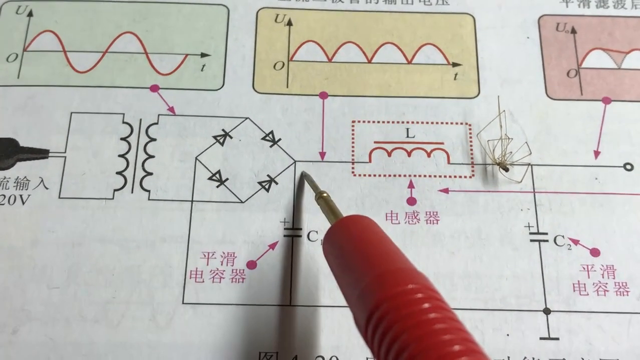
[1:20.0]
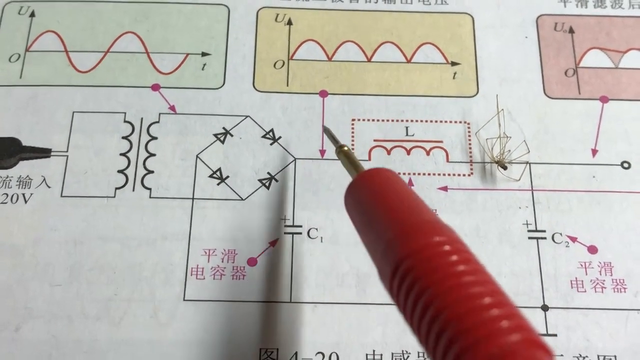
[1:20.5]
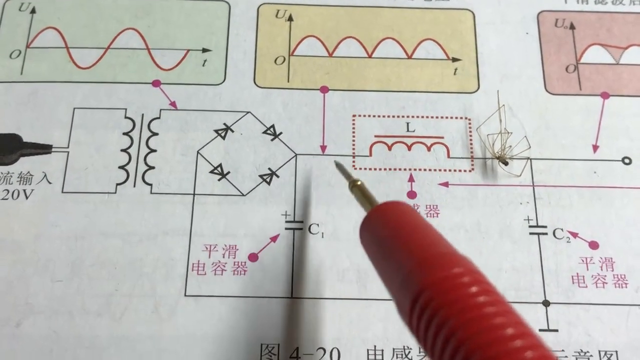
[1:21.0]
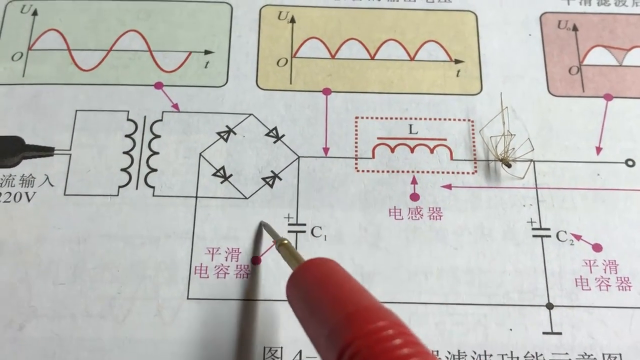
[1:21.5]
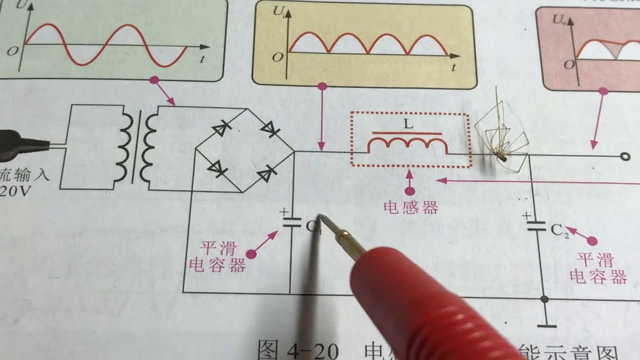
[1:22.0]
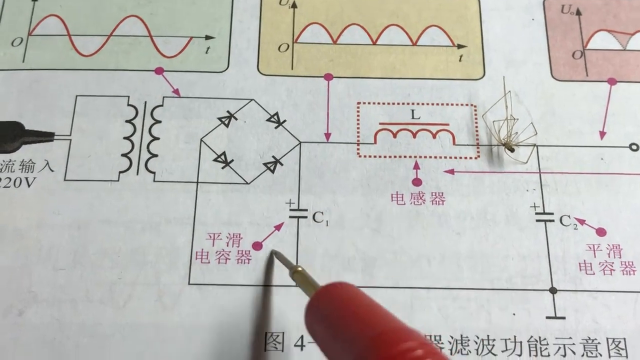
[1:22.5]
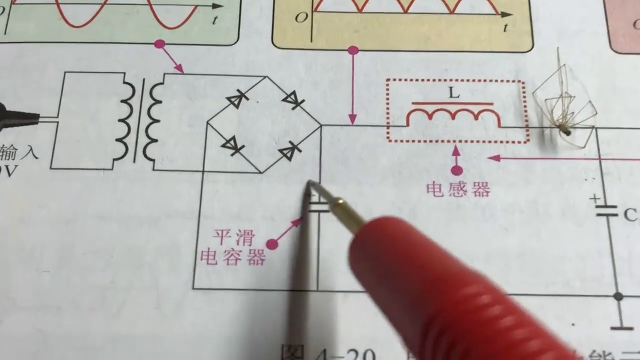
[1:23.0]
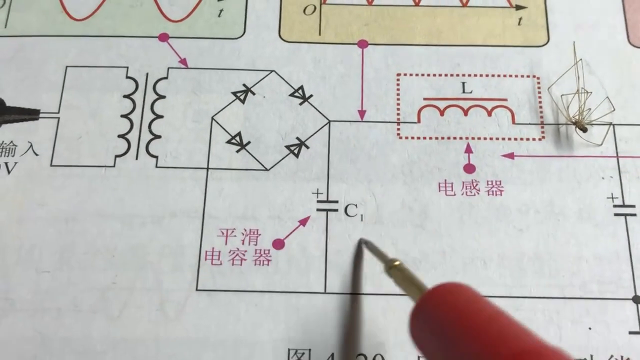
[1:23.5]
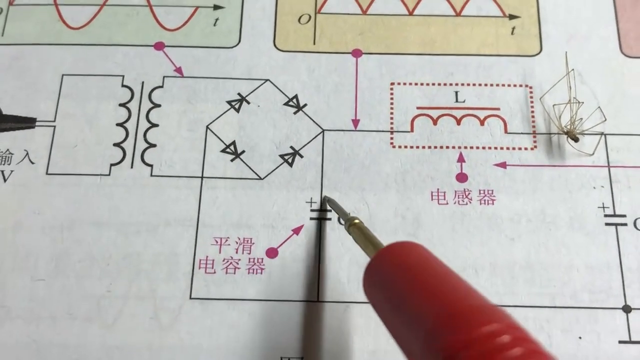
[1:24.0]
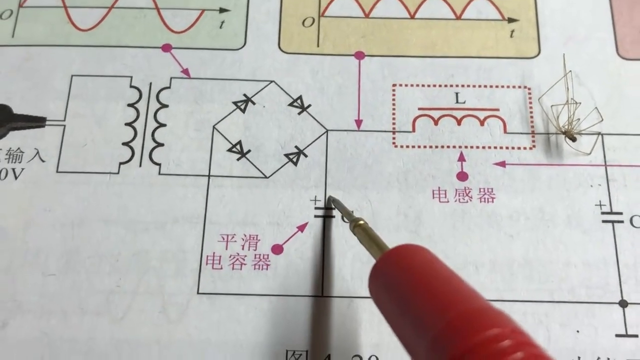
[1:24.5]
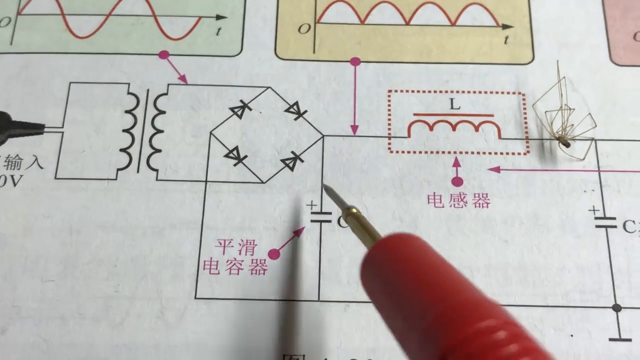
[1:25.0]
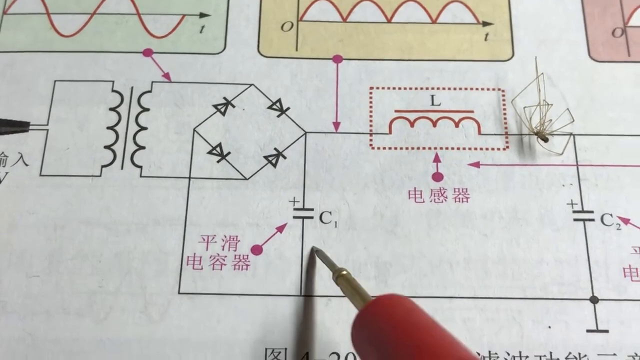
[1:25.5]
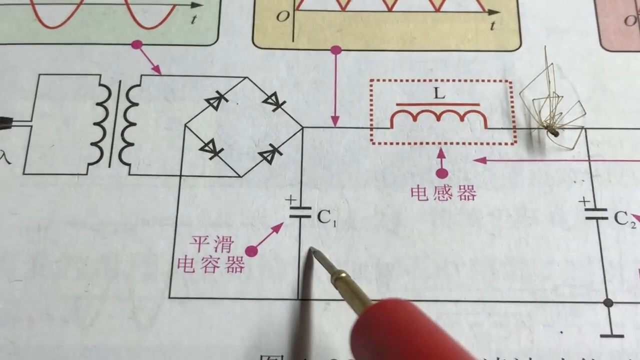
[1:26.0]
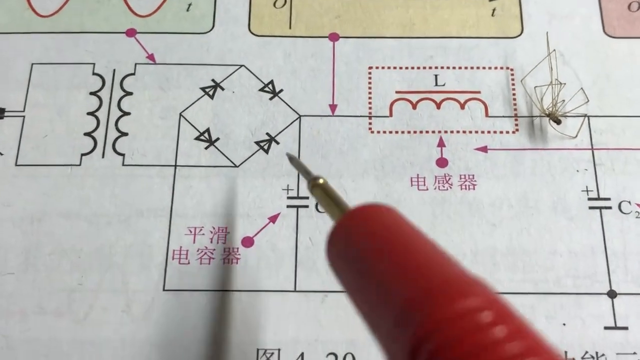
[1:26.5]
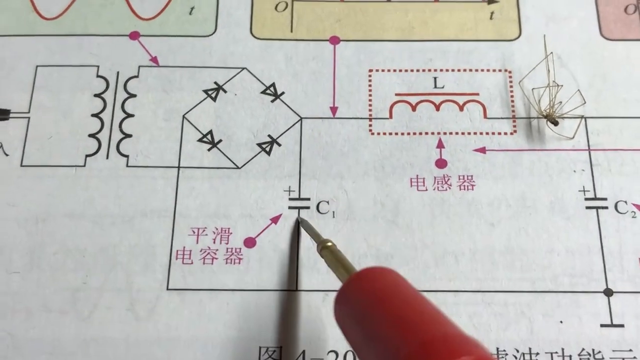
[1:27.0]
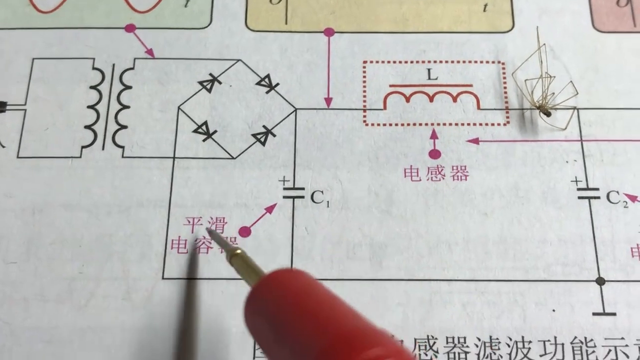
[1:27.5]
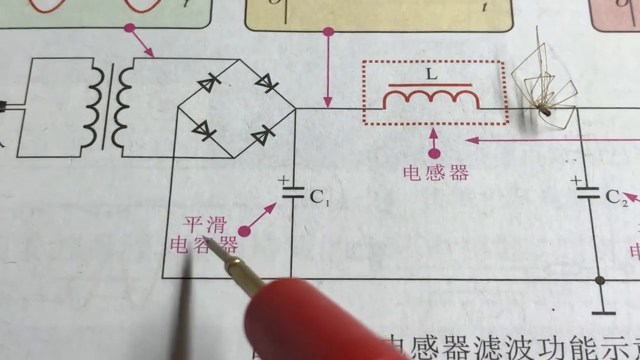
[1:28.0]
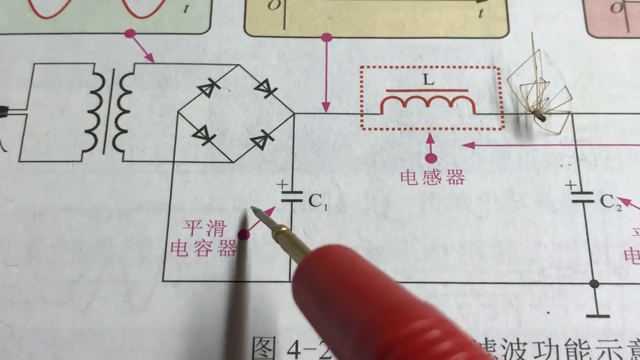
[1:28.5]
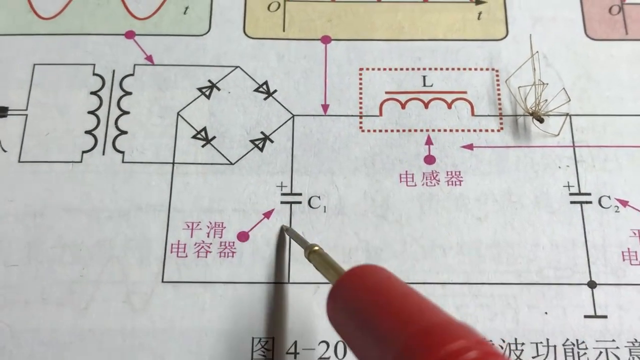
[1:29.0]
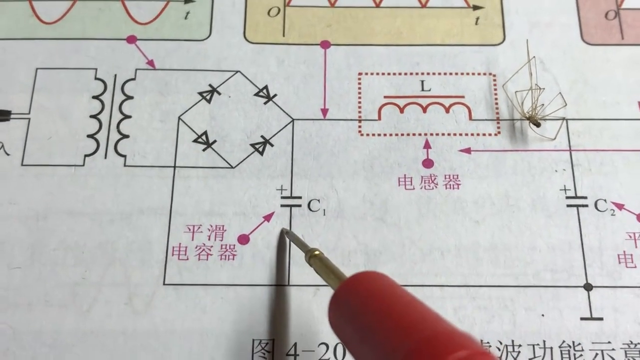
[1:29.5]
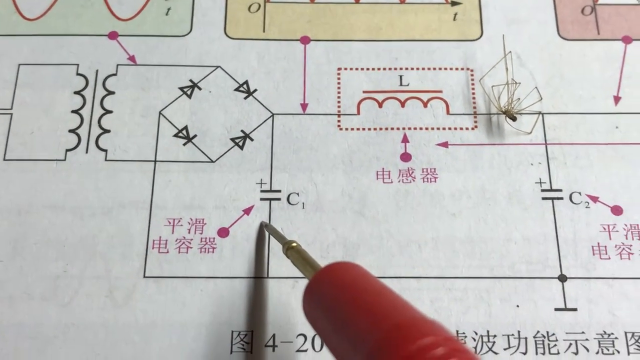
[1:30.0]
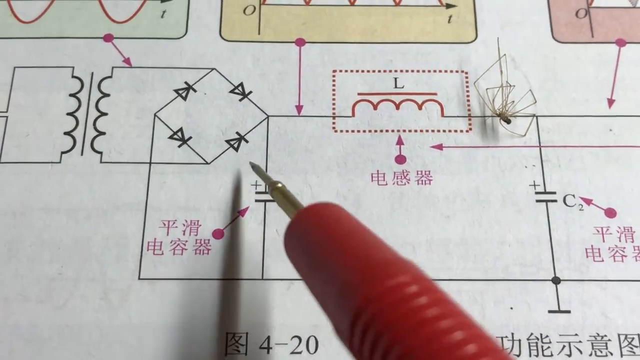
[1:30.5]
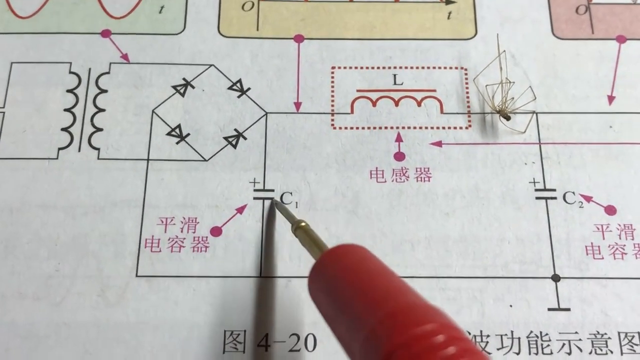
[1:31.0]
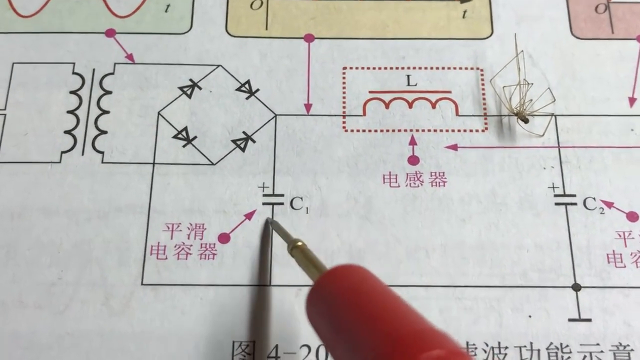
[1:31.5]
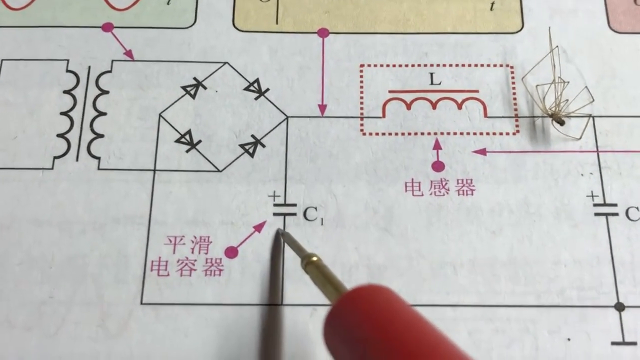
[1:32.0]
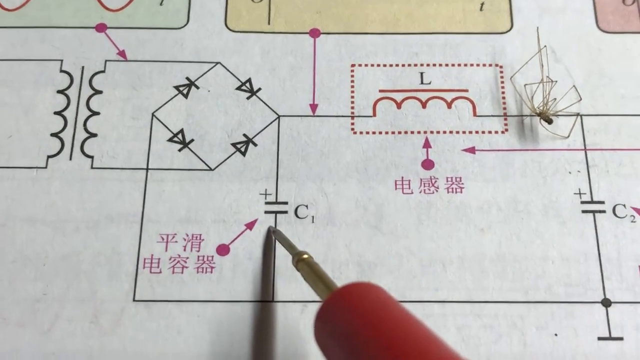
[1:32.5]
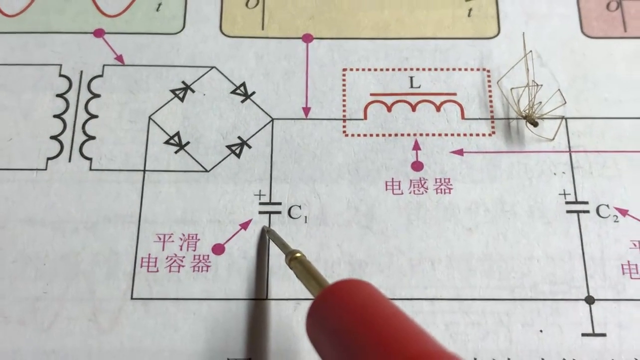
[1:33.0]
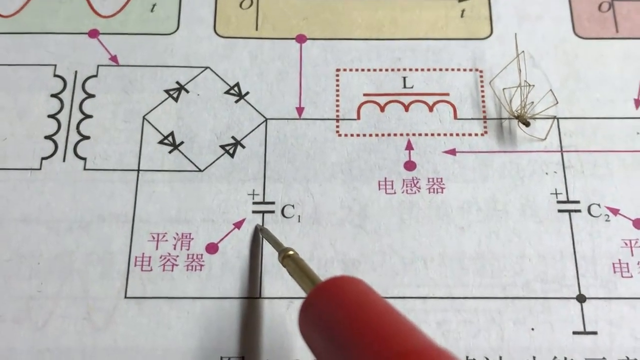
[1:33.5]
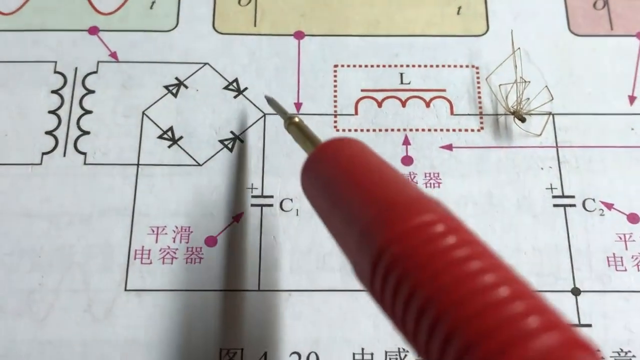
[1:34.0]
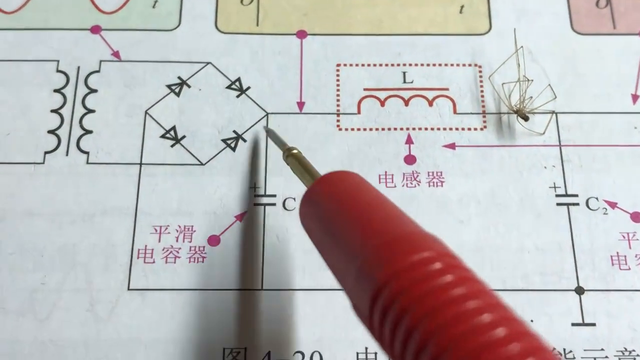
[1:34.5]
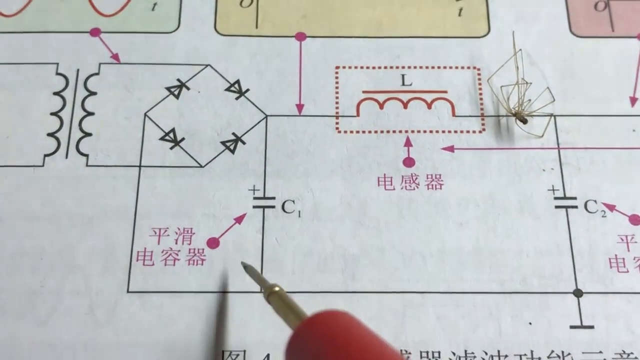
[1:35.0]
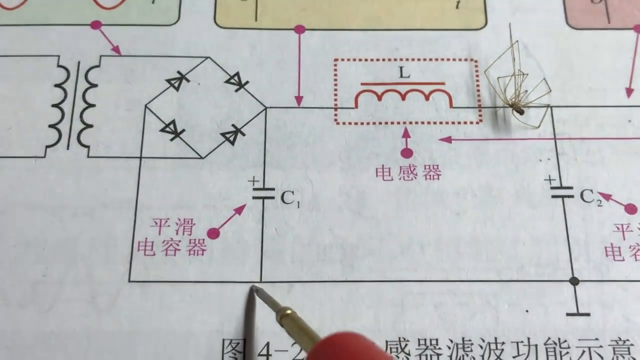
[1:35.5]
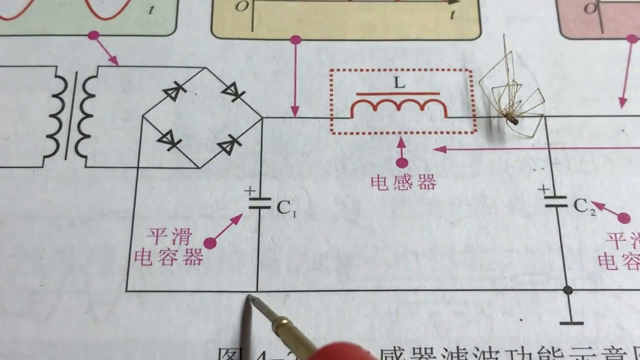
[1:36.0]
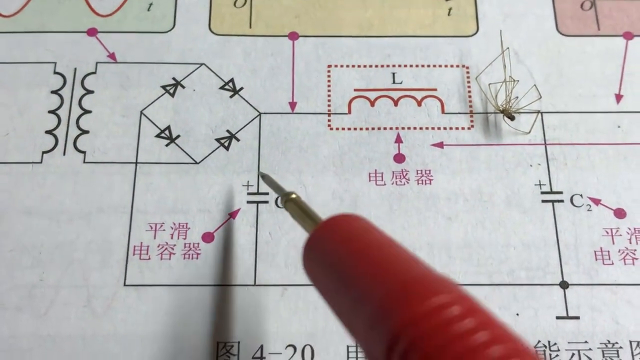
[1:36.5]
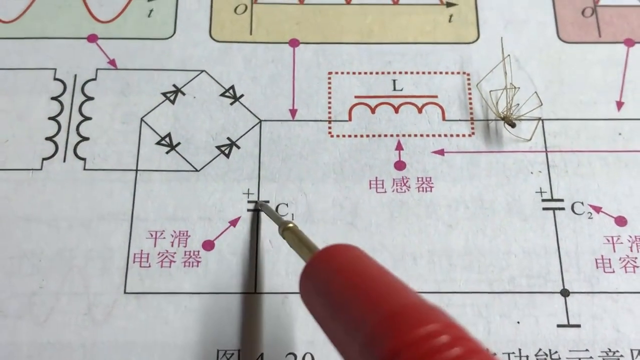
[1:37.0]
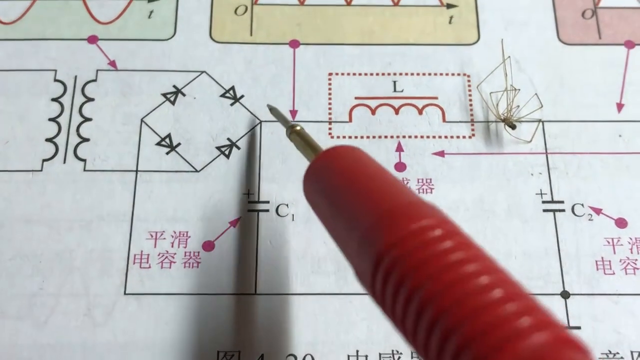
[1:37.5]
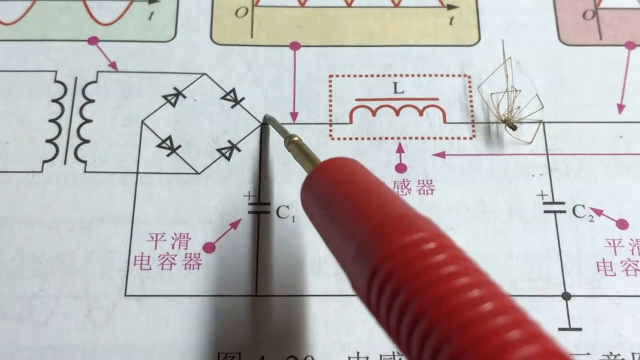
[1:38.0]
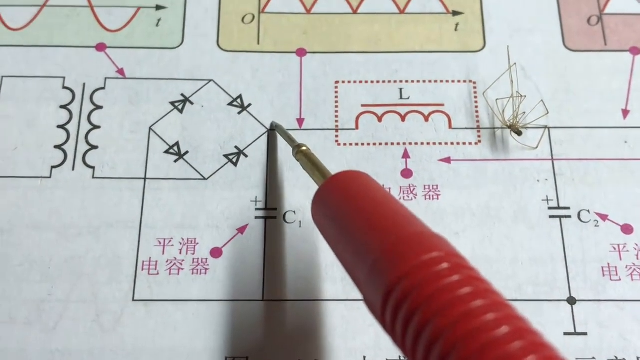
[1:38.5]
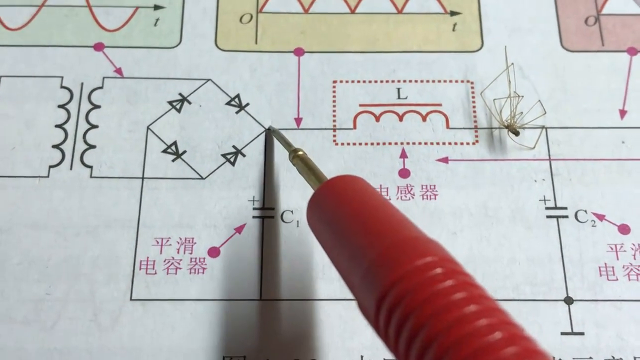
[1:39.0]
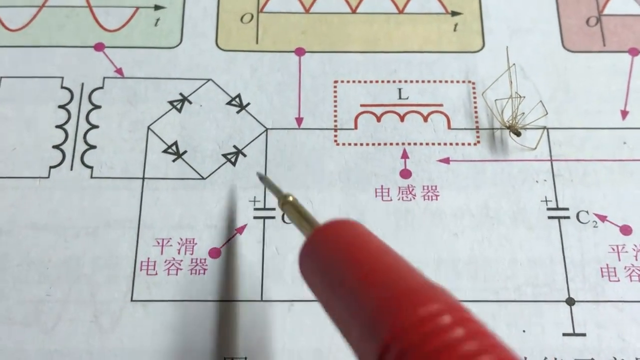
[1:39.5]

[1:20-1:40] A sort of gold pointer attached to a red sort of base is held by someone who cannot be seen. It points at a diagram on a white page that looks like a sort of schematic, with black lines and all sorts of shapes. There is also text on the diagram that looks like Chinese. The pointer first points to some of that text, then to another shape that looks like a plus sign next to an equal sign, followed by the letter C with a small 1 next to it. The pointer then moves up and goes back and forth between an area at the top of the diagram and an area below it.